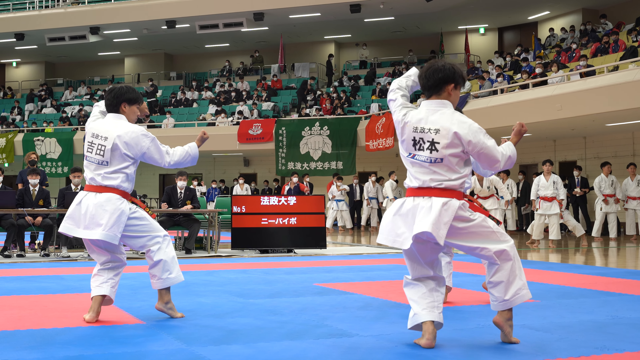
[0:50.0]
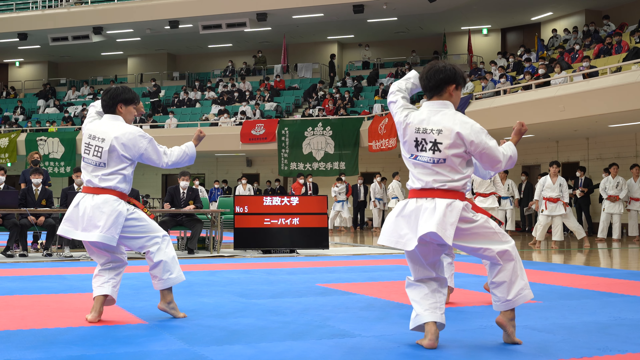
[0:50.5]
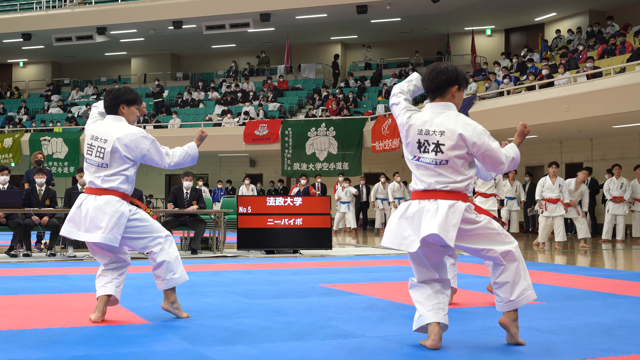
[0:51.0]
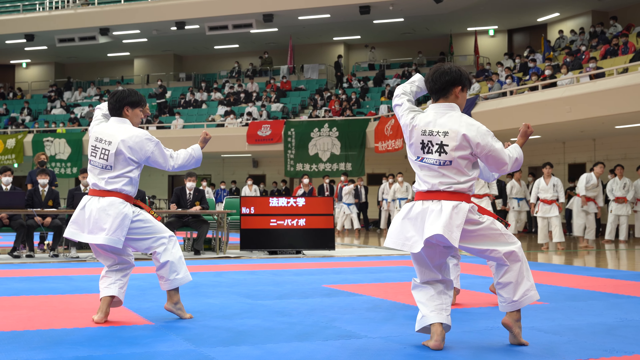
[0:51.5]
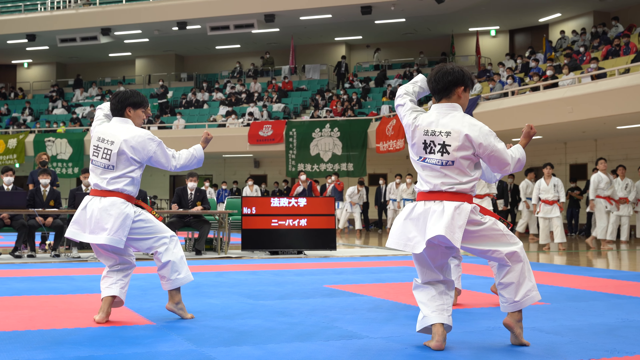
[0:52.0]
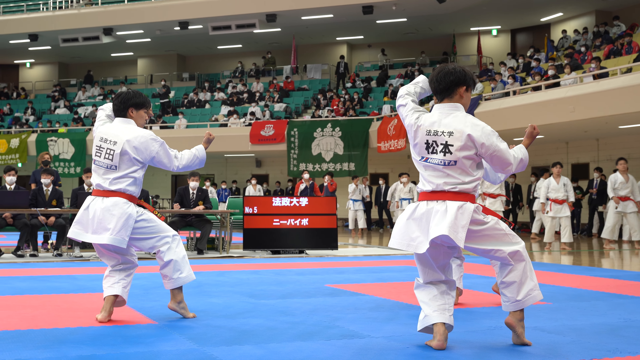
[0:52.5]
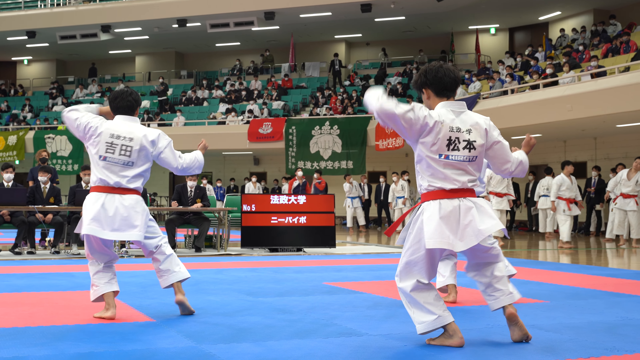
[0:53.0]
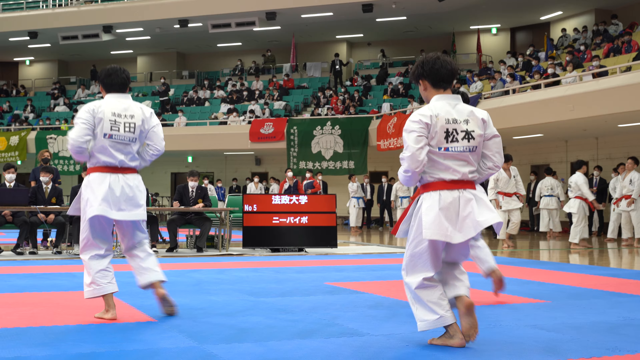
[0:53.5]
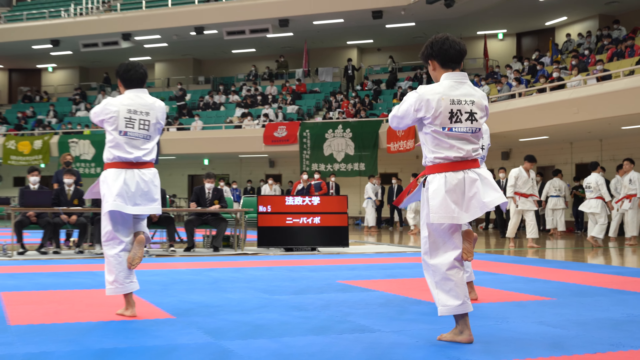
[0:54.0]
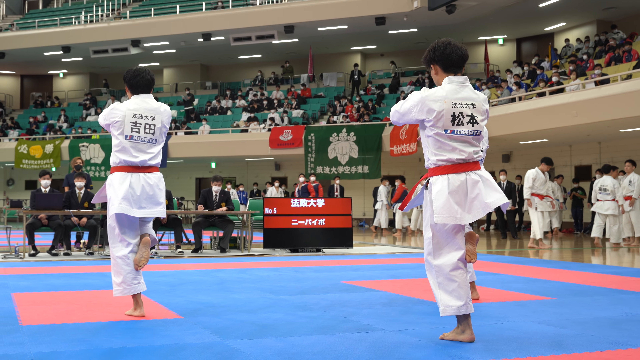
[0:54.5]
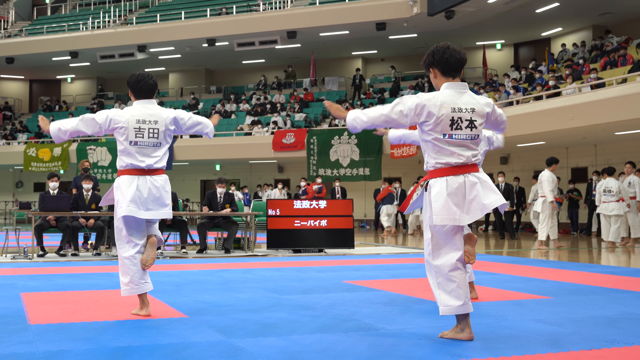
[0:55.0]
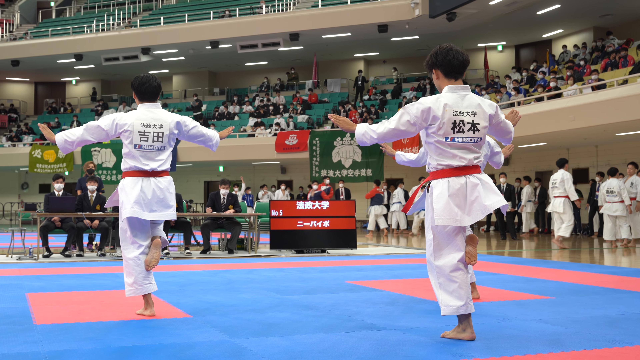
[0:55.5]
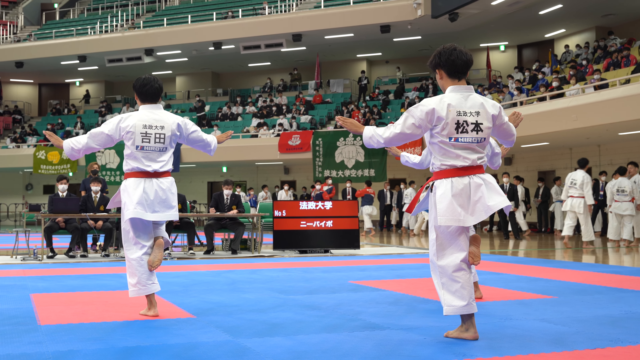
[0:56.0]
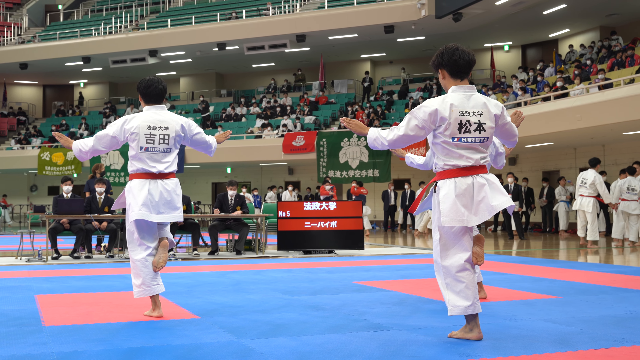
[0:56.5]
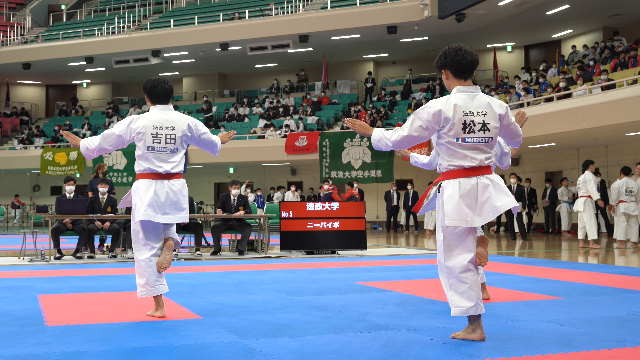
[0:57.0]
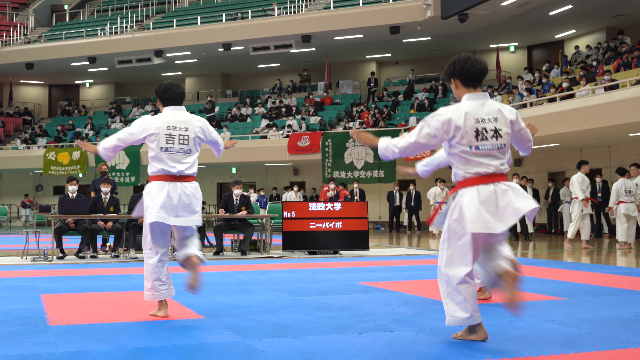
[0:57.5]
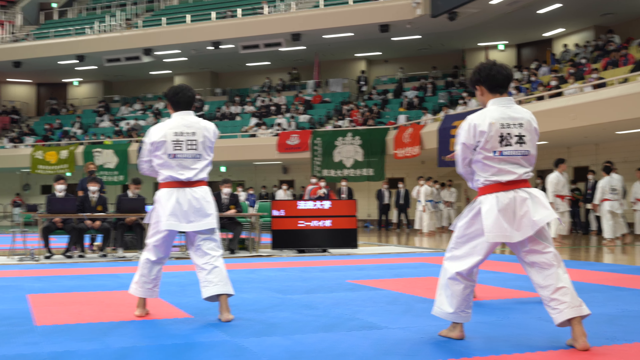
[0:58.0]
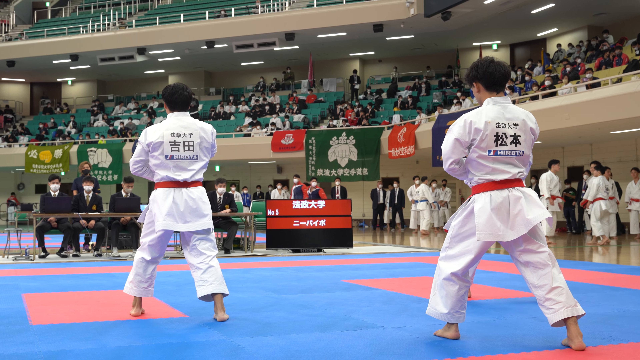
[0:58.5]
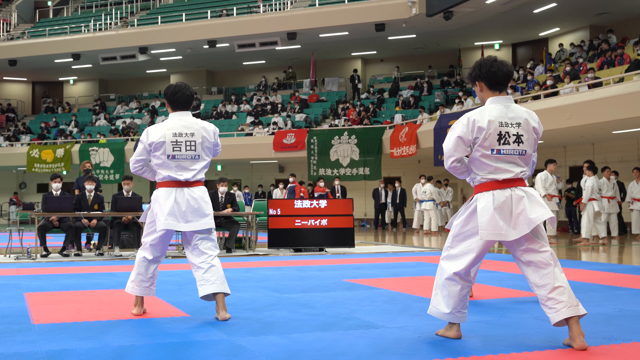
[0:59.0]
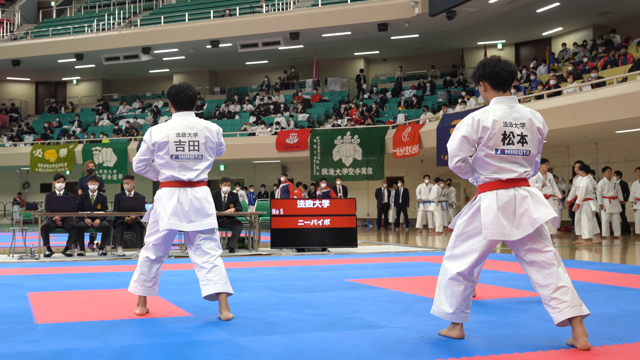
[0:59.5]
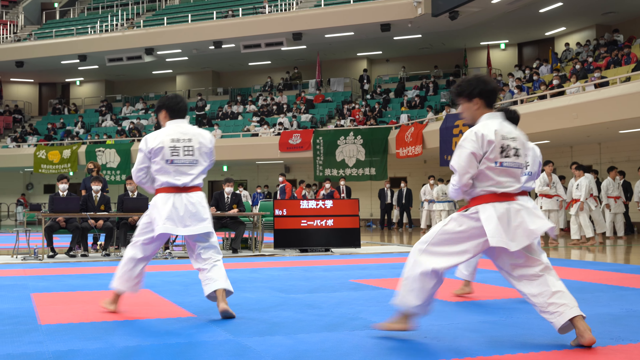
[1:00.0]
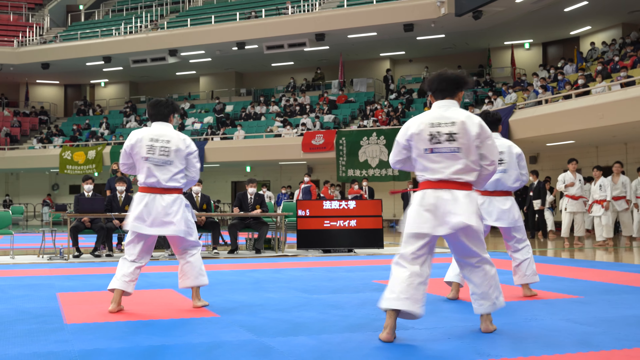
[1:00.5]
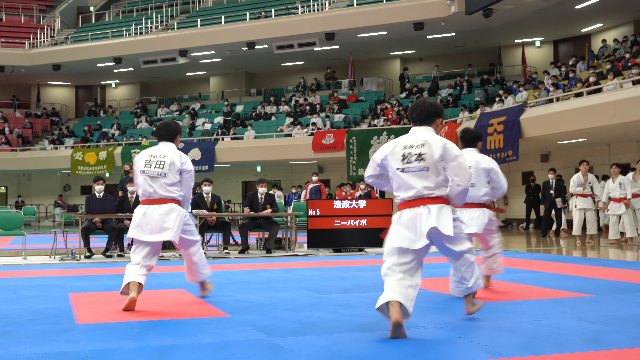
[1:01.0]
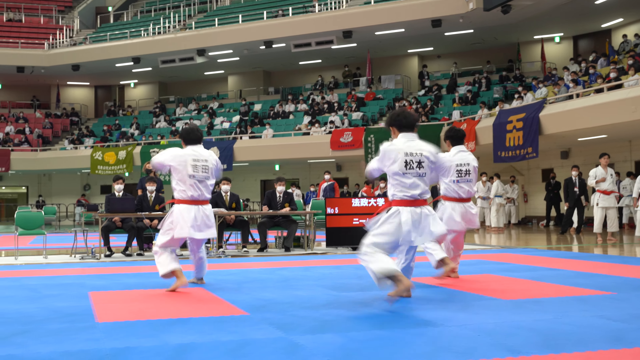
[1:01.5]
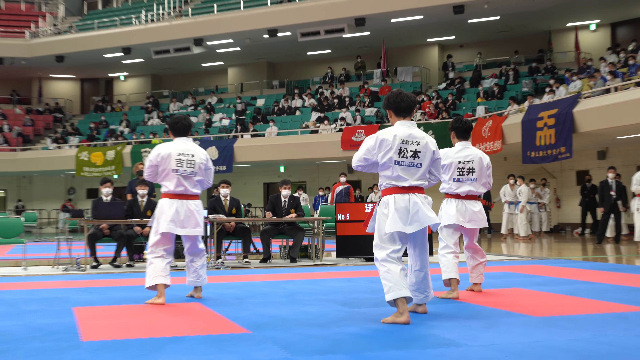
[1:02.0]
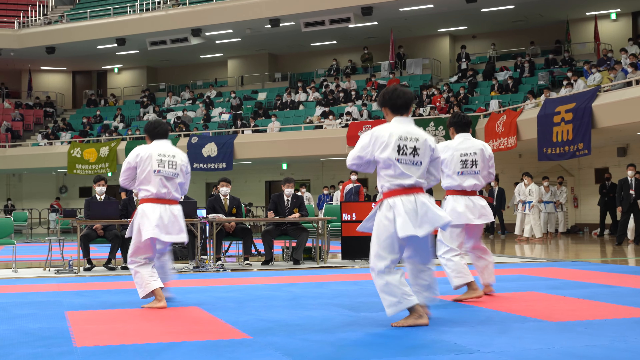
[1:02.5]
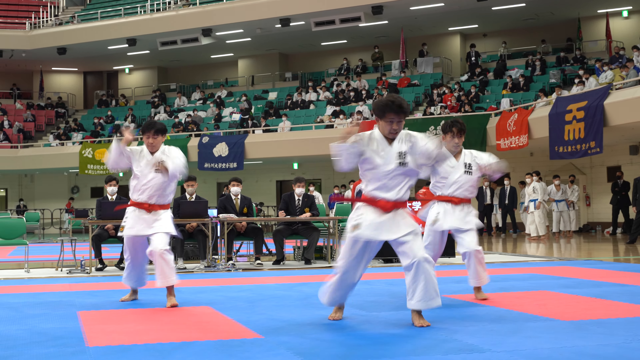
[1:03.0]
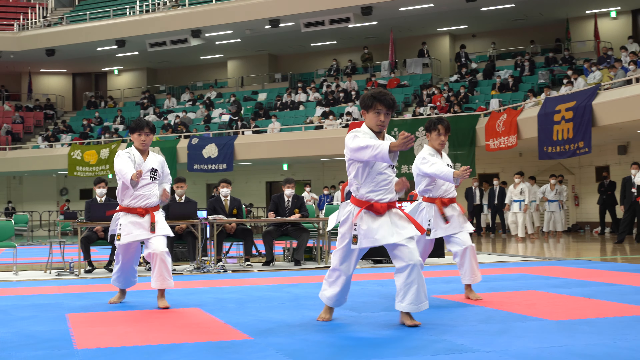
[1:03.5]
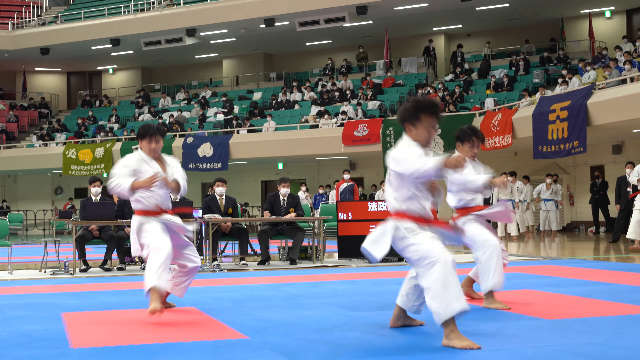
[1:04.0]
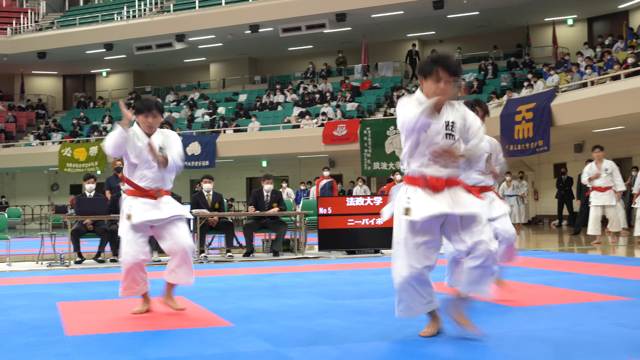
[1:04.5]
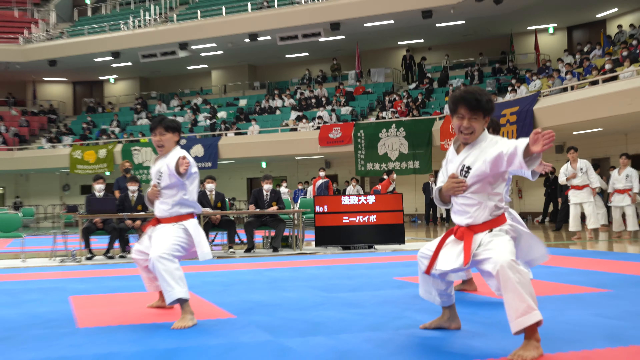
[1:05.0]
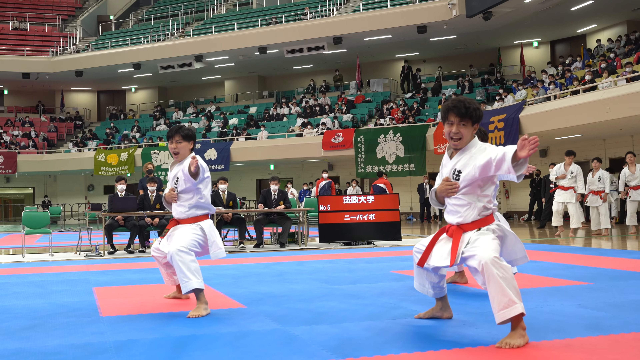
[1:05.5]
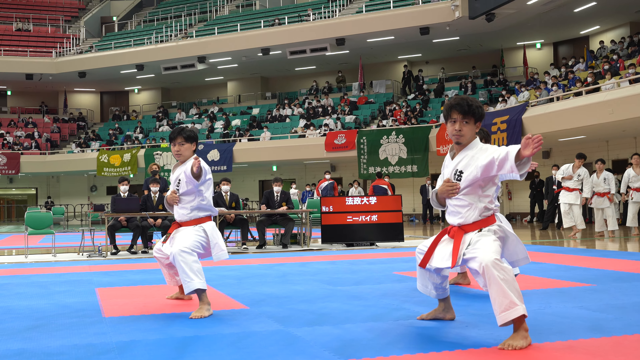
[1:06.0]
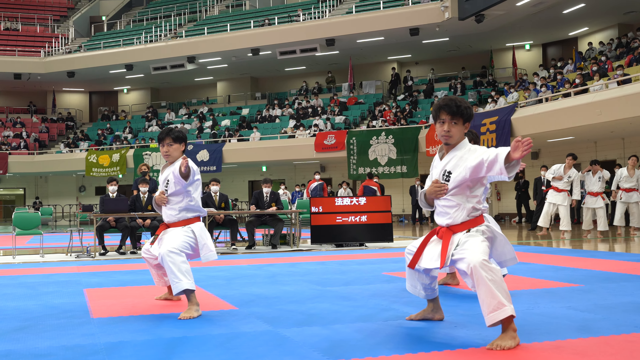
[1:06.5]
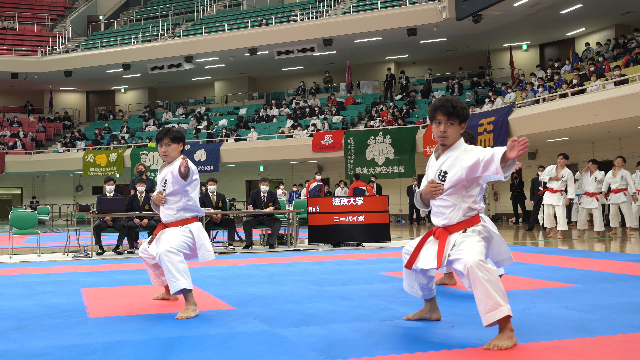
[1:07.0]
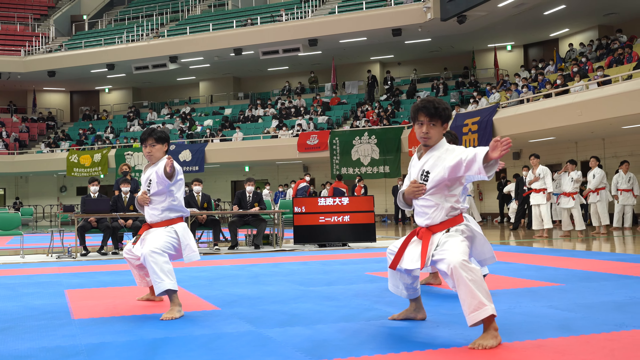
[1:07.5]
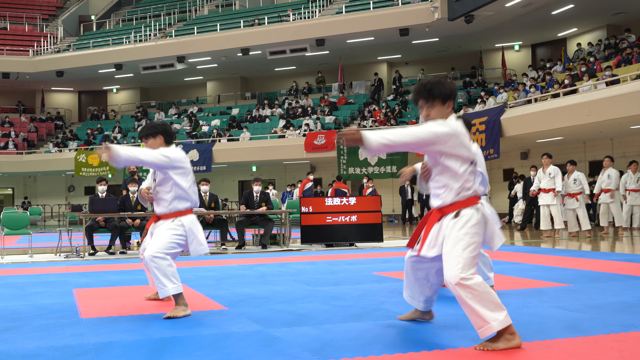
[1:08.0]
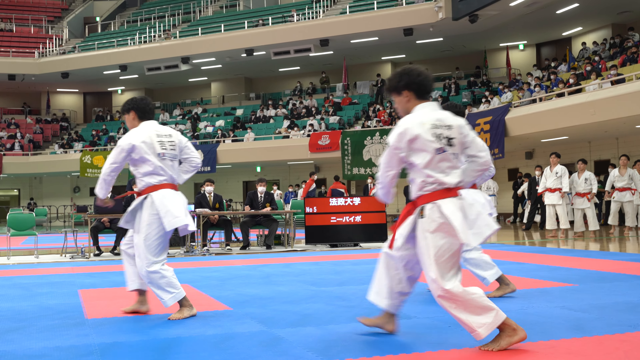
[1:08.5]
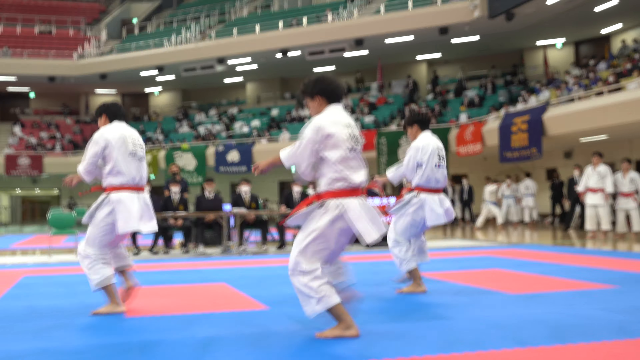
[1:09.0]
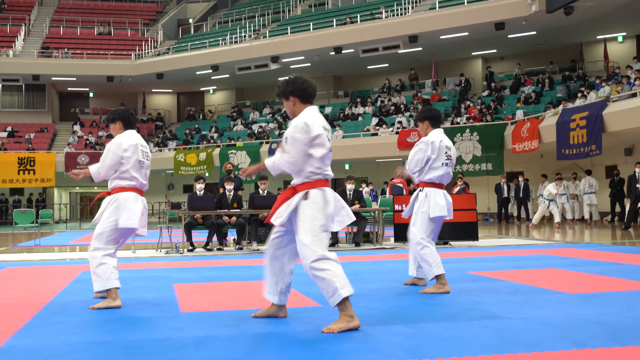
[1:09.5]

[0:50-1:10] The men begin facing the side of the room, with their backs visible to the camera. Each has one foot flat on the floor with a bent leg, while the other leg is also bent, knee popped, with only the pad of that foot on the ground. Their right hands are fisted with the arms bent, and their left arms are up at an angle. They pivot toward the back of the room and balance on one leg, stretching their arms out at their sides with palms flat and fingers facing up. Their arms come down and they go into a wider-legged stance, then shuffle forward with quick jabs, like 1-2, 1-2. They then do an abrupt about-face and a quick straight-armed hacking move, like a series of switches and hits, while yelling.